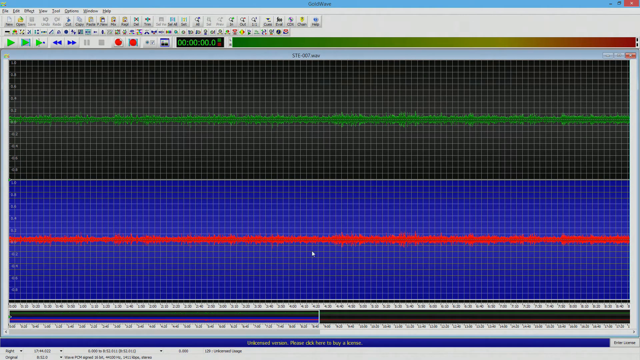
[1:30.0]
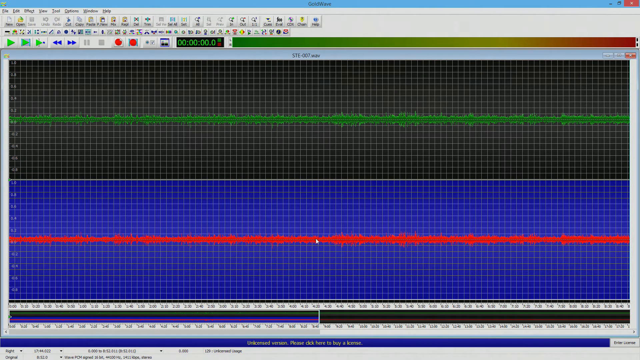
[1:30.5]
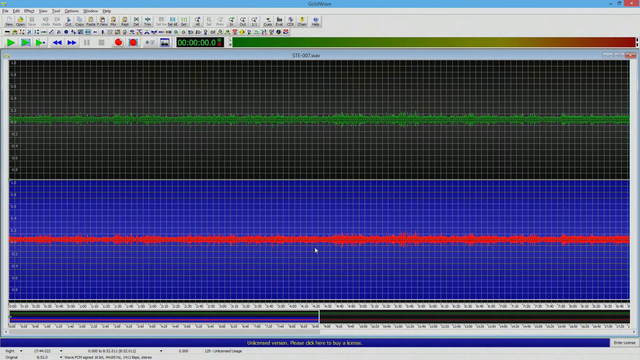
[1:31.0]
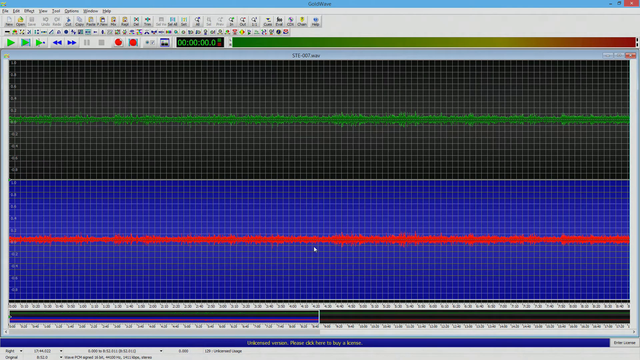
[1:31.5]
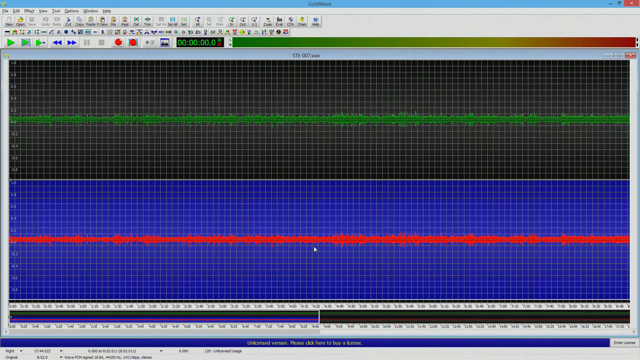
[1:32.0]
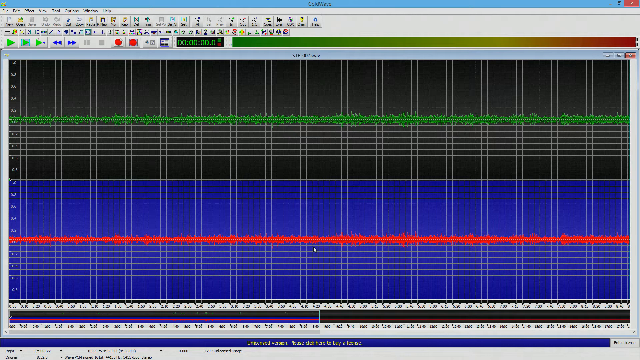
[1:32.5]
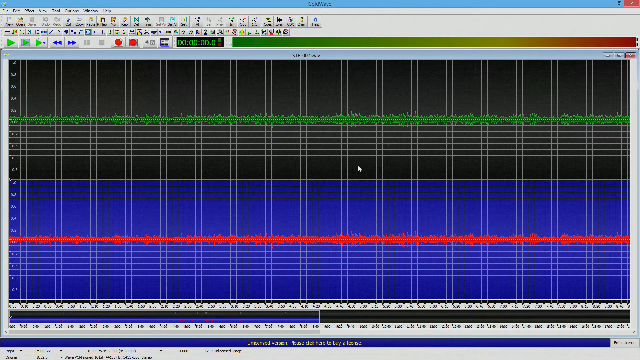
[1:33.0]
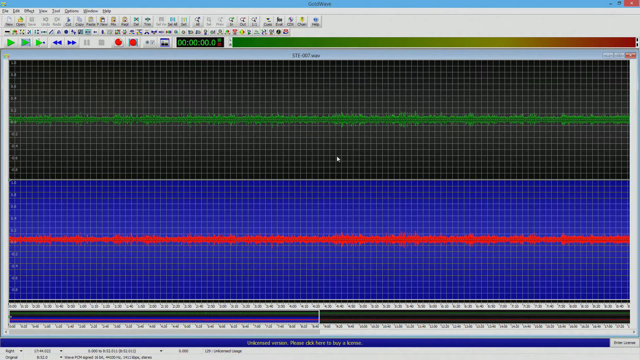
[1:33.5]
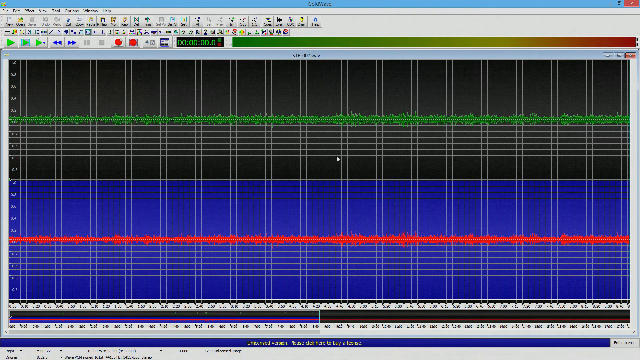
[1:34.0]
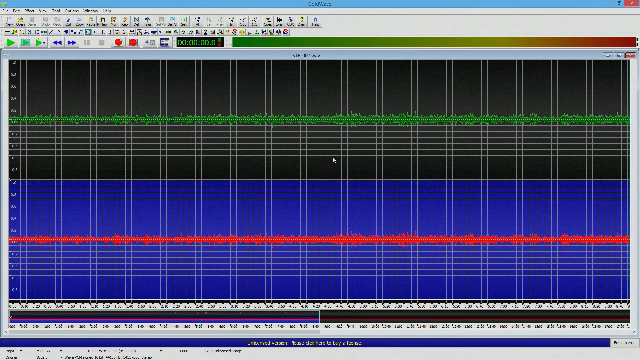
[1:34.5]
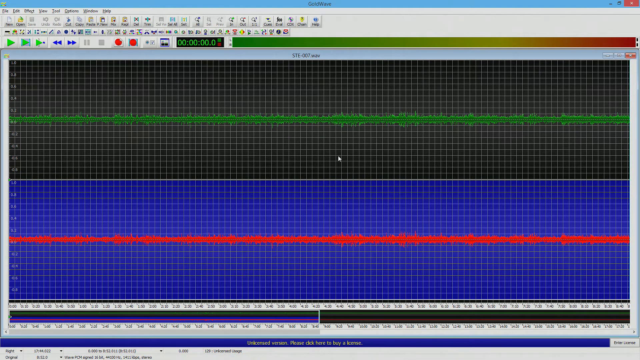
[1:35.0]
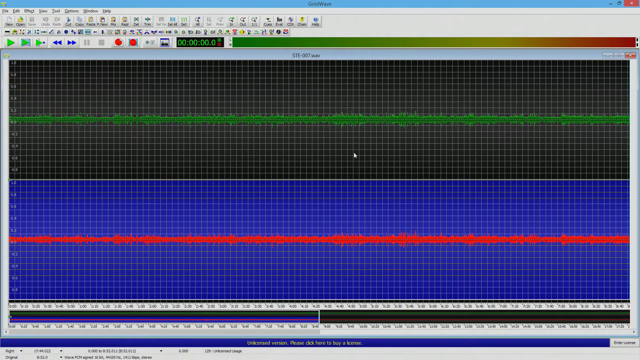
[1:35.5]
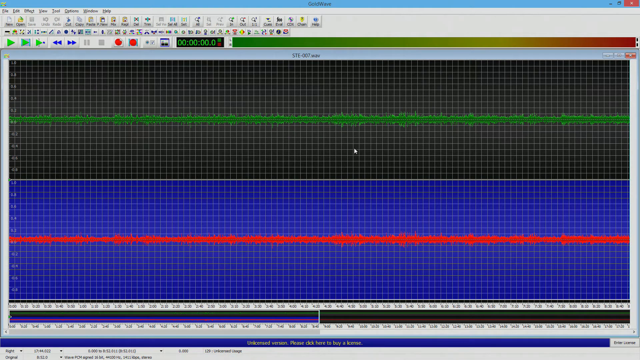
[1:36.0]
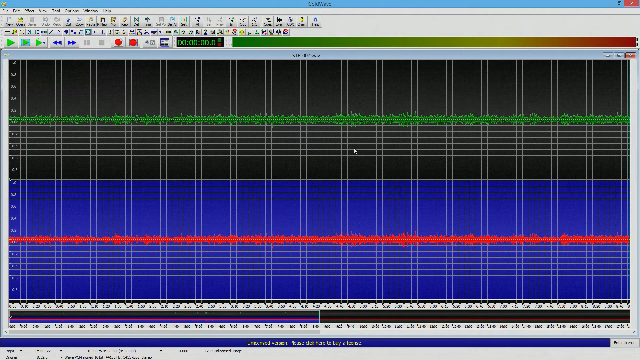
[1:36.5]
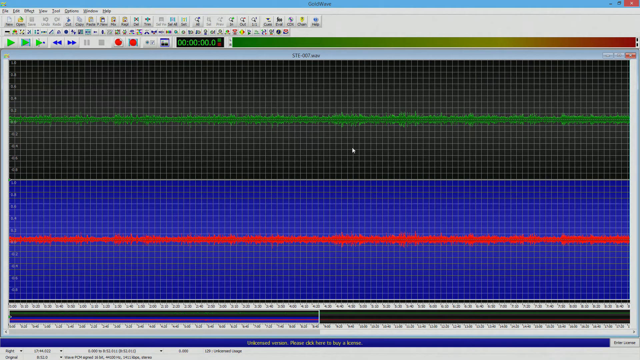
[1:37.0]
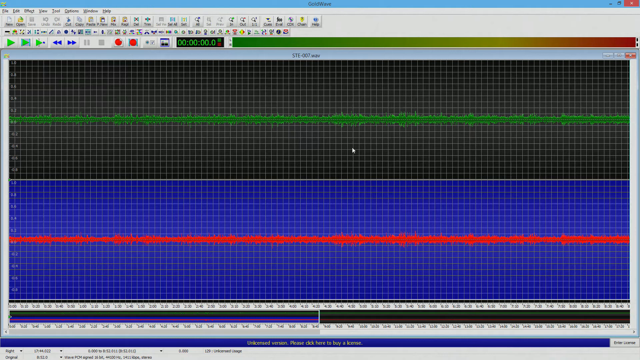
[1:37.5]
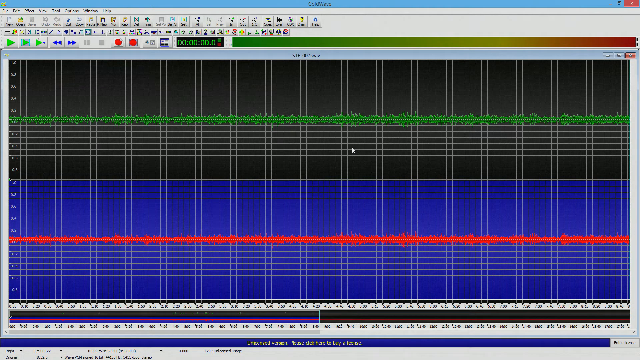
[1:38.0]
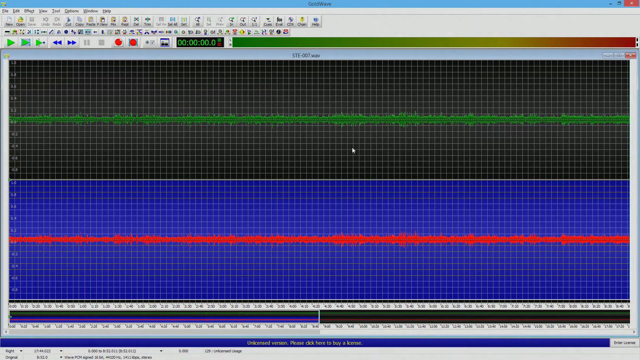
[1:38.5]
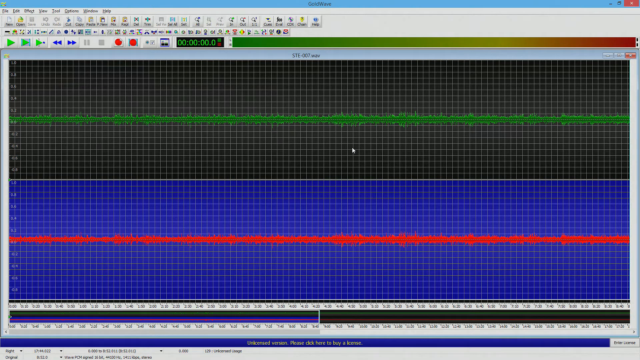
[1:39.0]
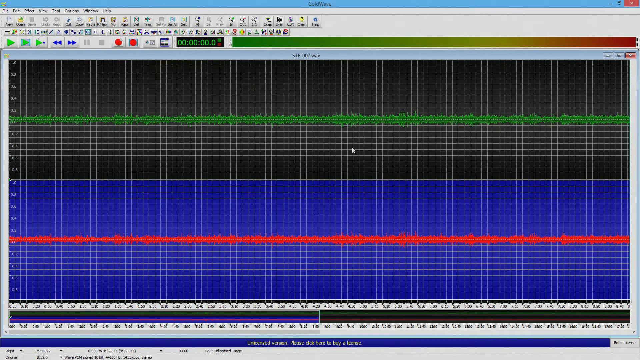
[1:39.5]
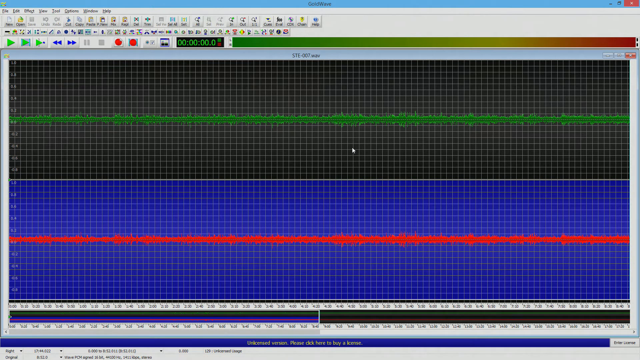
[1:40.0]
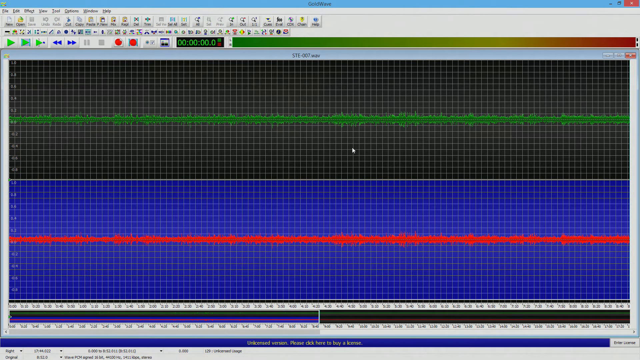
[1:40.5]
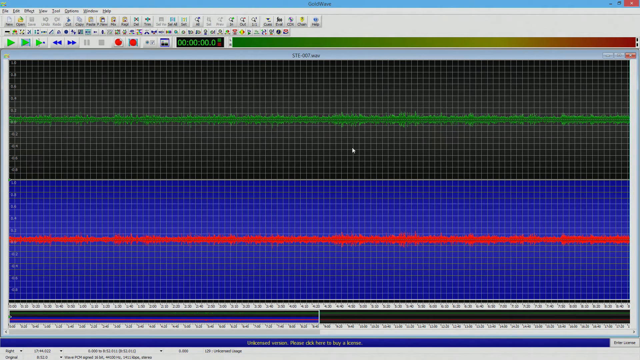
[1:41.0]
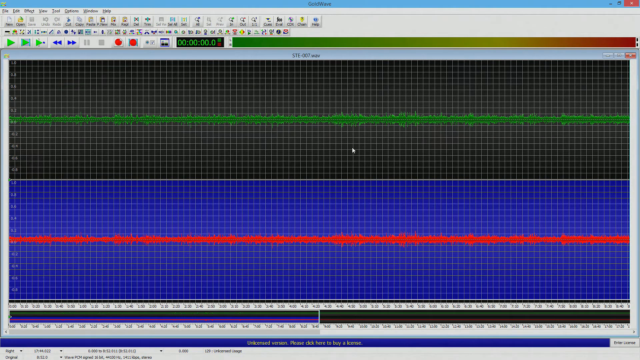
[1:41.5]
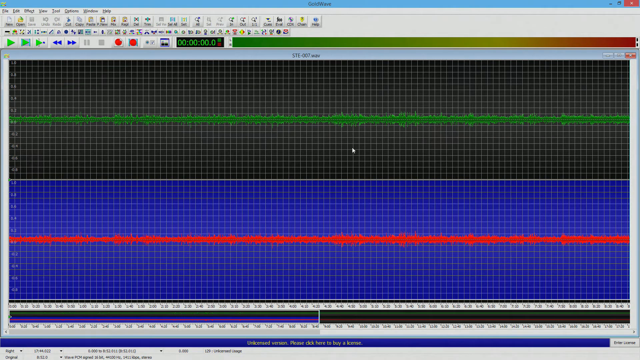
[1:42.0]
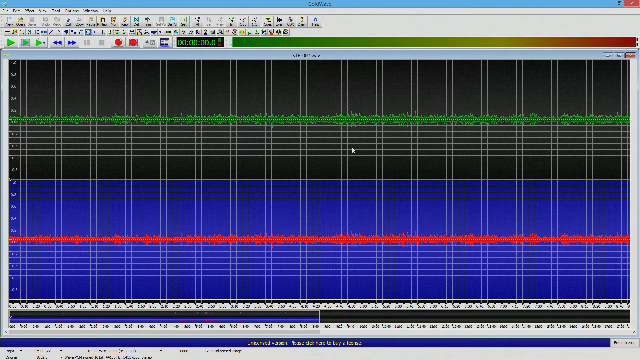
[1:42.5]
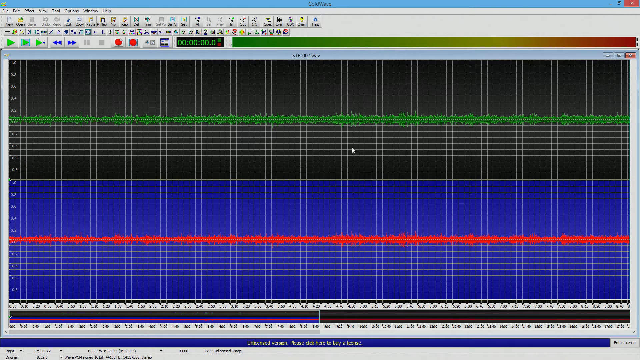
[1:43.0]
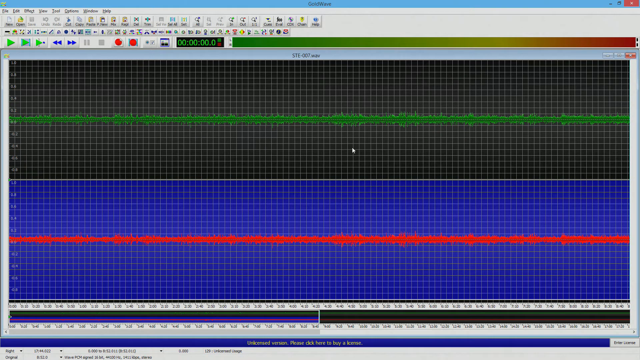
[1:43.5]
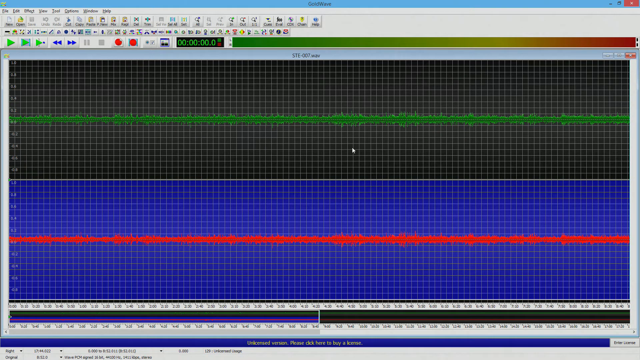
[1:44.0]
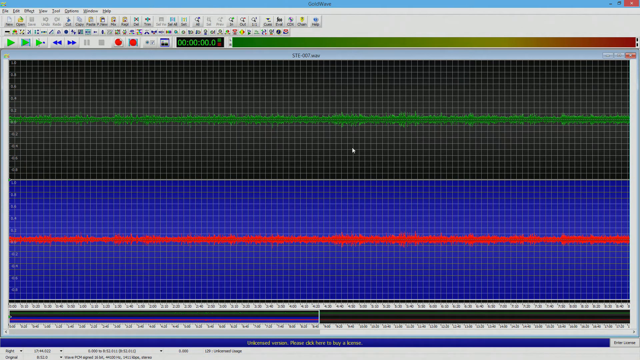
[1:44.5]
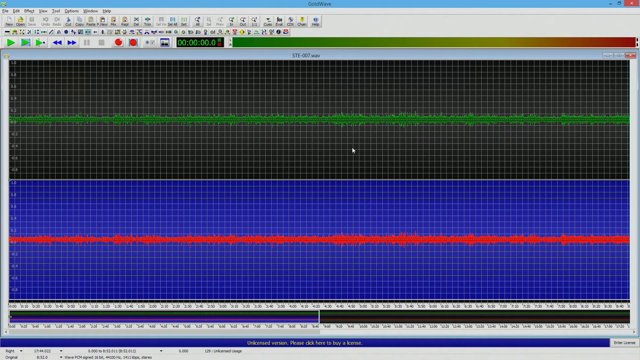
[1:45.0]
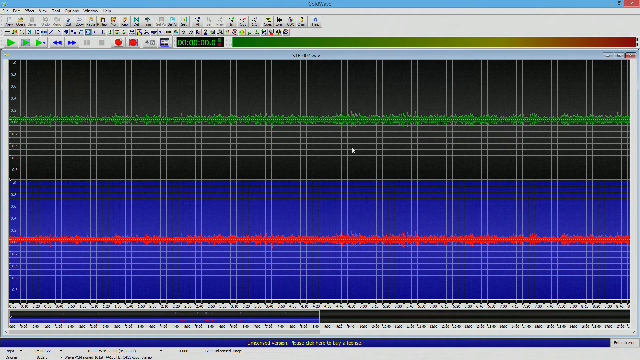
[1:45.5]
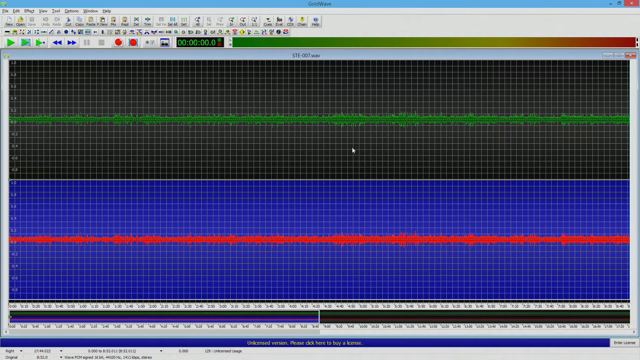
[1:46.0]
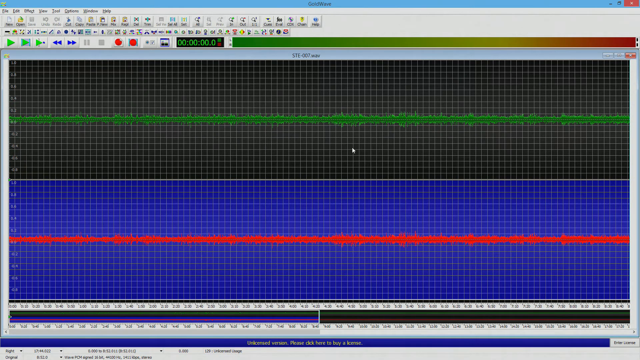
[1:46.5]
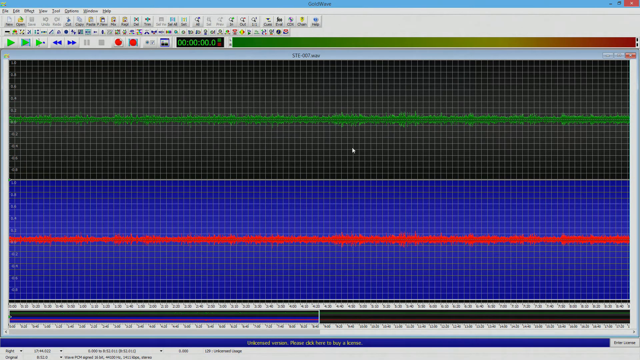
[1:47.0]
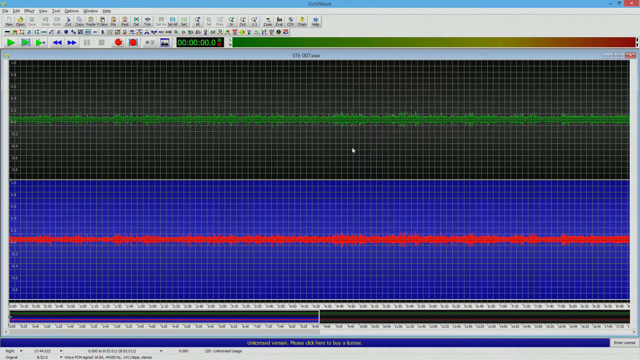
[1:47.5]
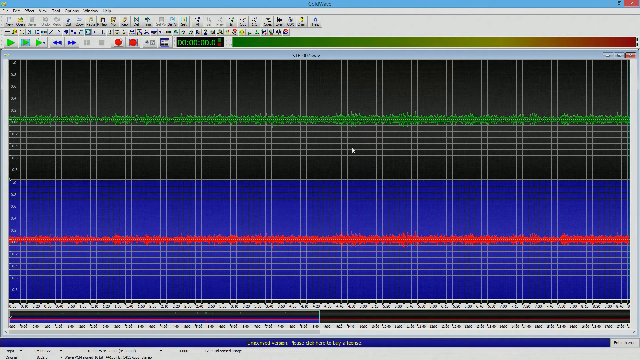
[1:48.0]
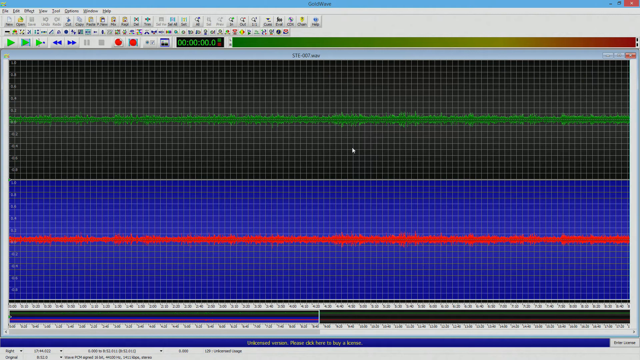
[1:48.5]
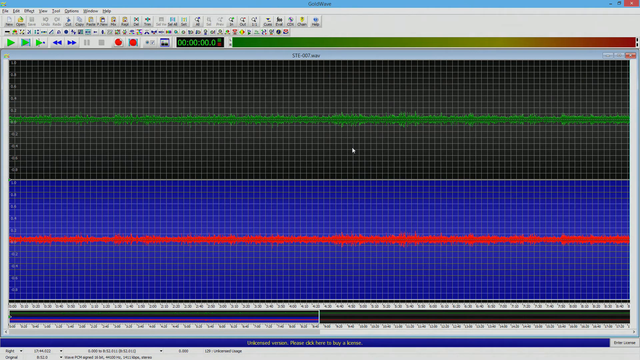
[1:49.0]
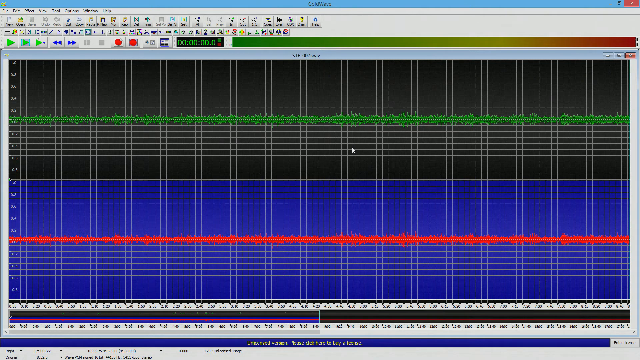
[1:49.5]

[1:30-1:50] A computer screen shows almost a graph of small boxes. The upper portion is a dark color with a green line running across it horizontally; the bottom portion is blue-purple with a red line running across it horizontally. In between is a light gray line. Numbers run vertically down the left-hand side, and two white bars run the length of the screen at the very bottom, with numbers in them along the entire length. A cursor moves around rapidly, from the bottom portion to the top, stays still in the dark portion, then jumps down to the bottom portion.